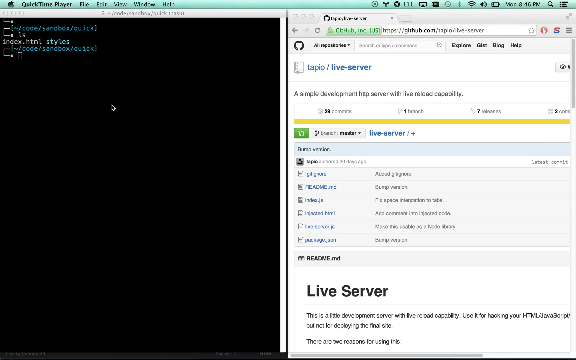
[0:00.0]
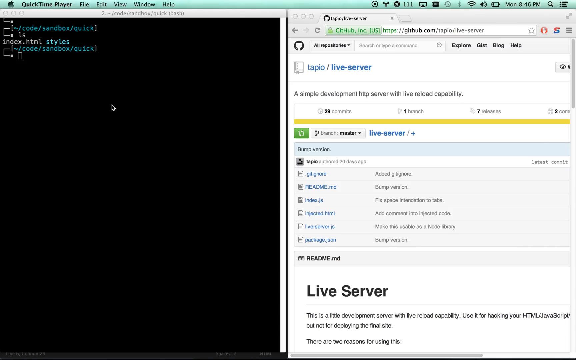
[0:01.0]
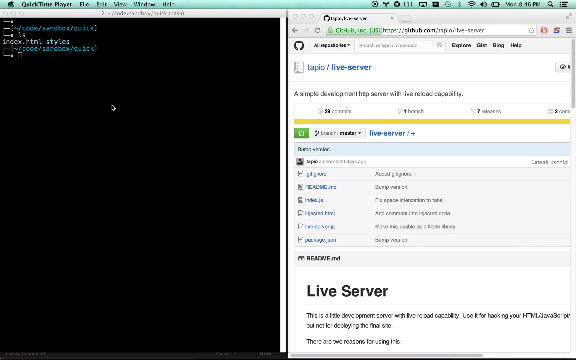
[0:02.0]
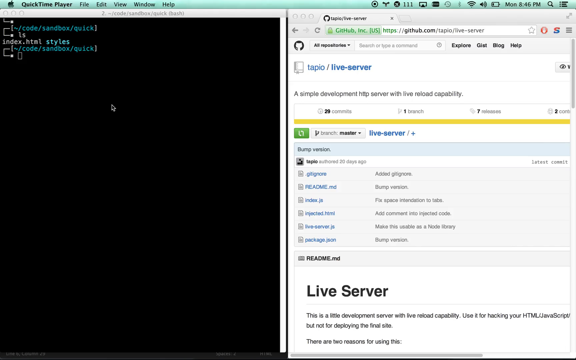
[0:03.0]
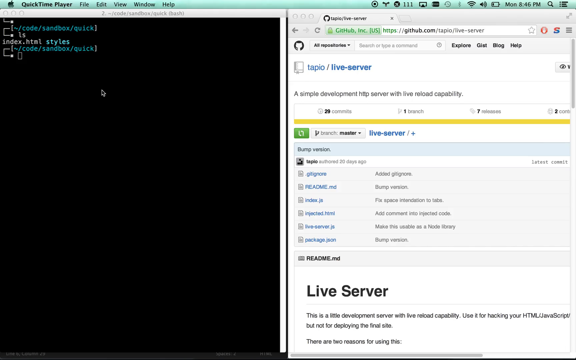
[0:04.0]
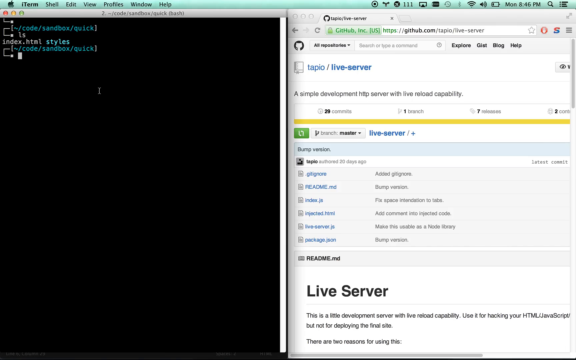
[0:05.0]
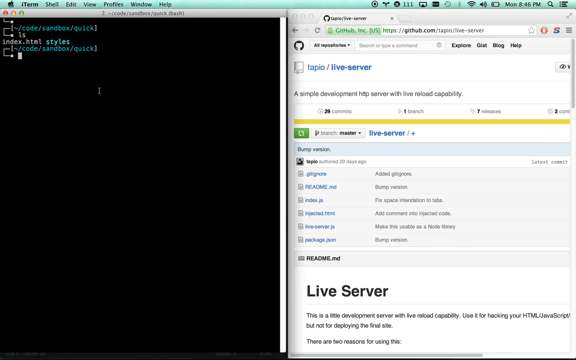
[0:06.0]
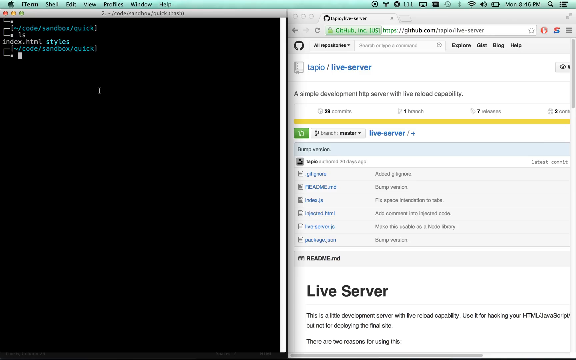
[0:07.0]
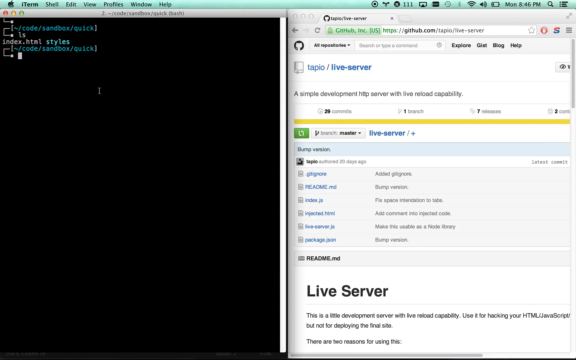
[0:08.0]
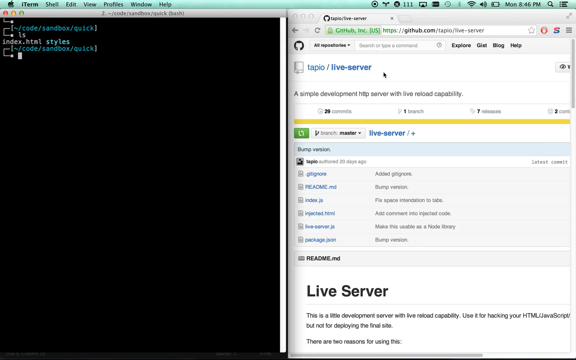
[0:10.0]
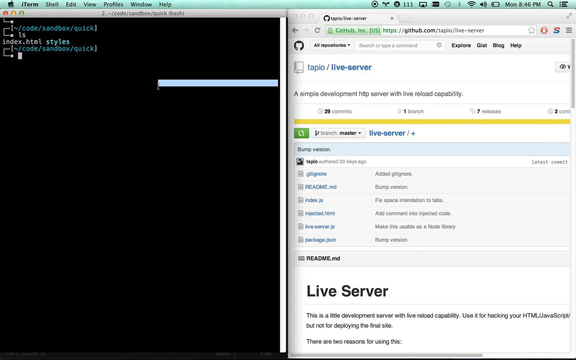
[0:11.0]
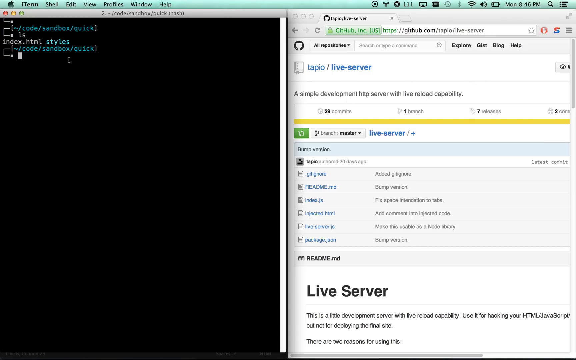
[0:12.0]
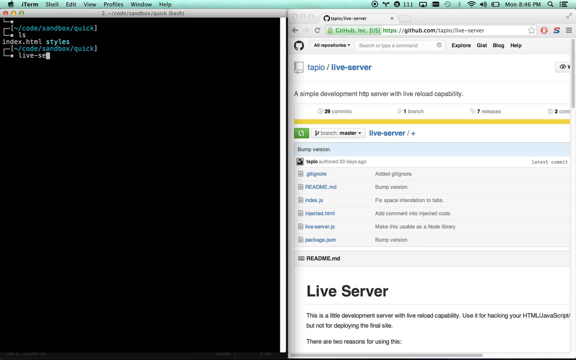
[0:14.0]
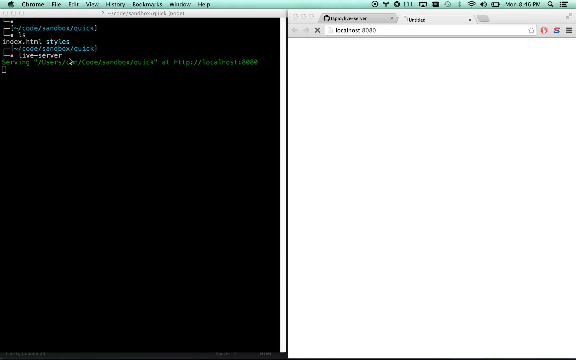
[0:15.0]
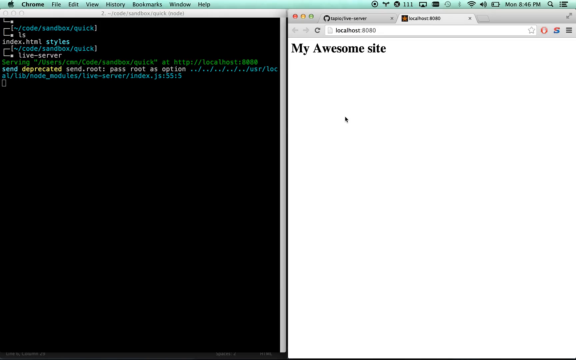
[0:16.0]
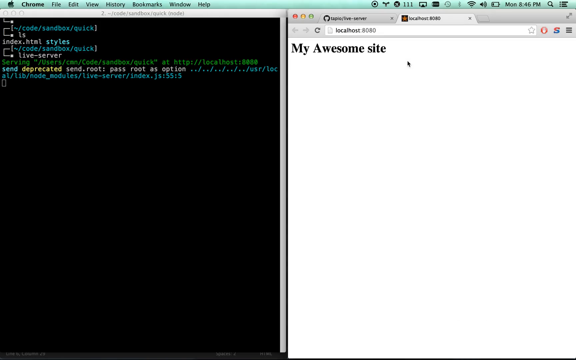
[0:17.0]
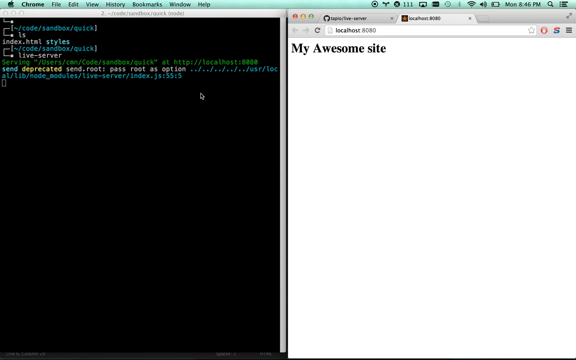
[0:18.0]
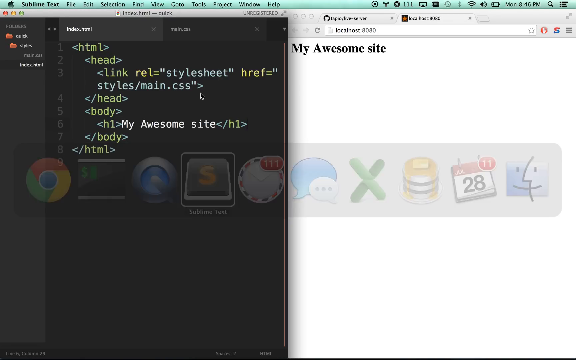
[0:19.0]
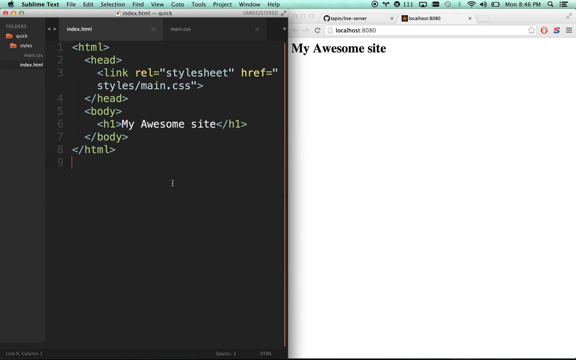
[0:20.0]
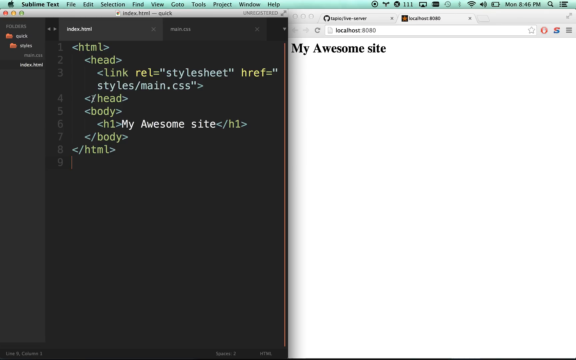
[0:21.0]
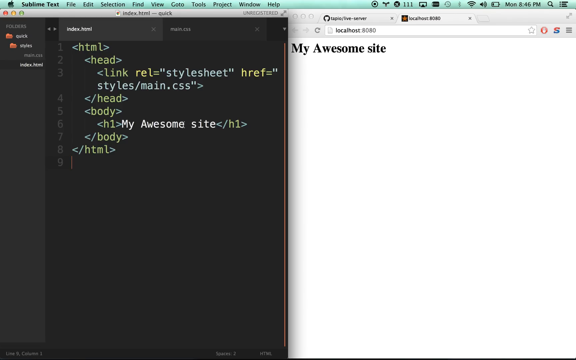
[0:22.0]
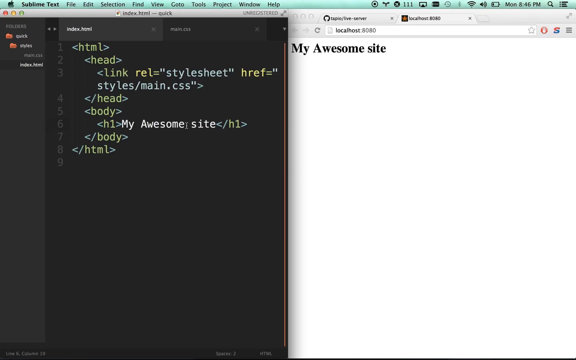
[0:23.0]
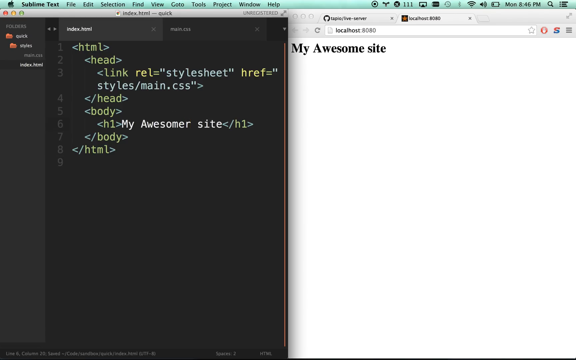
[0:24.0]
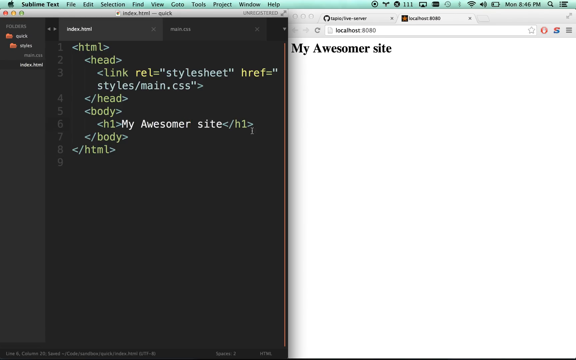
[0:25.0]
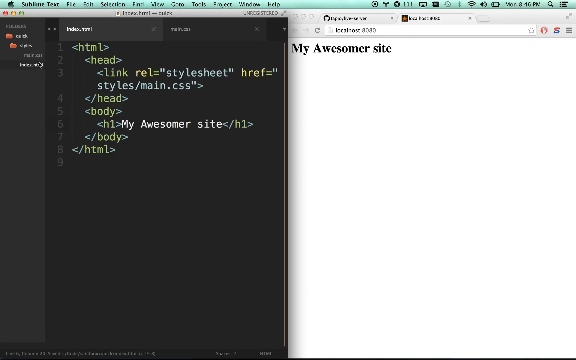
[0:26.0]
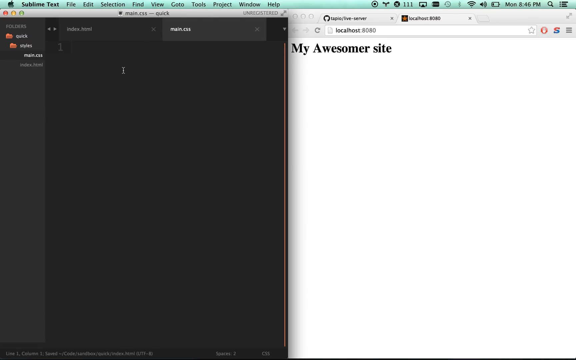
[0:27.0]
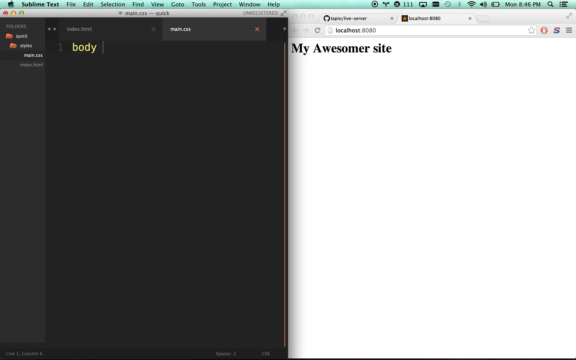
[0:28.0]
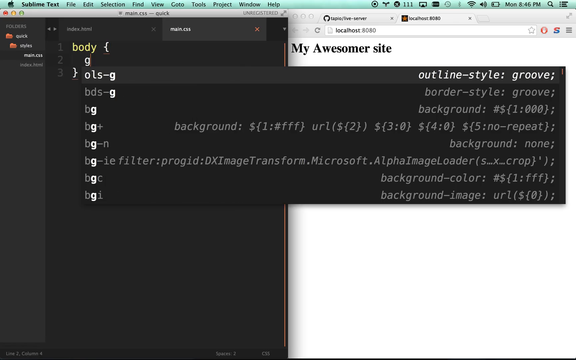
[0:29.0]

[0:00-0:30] A screen recording shows an iMac, a MacBook or a MacBook Air, identifiable by the Apple Mac menu bar at the top of the screen with its familiar icons. The left half of the screen holds the terminal, here called iTerm, where a person types various commands. The terminal has the usual dark black background, and the typed text is mainly green, blue and yellow. The right half of the screen shows Google Chrome, which alternates with another program called Sublime Text. On the Chrome side, text reads "Lifesaver", and the page is basically a walkthrough for configuring a server on a Mac.